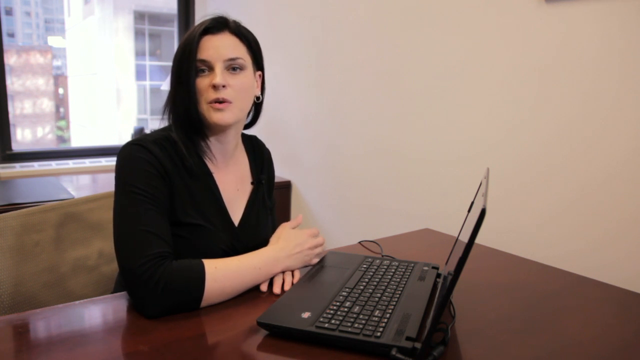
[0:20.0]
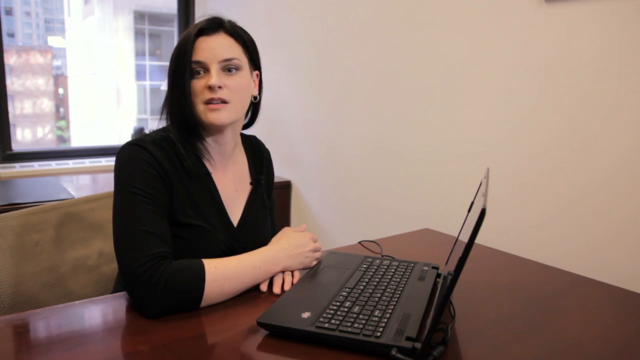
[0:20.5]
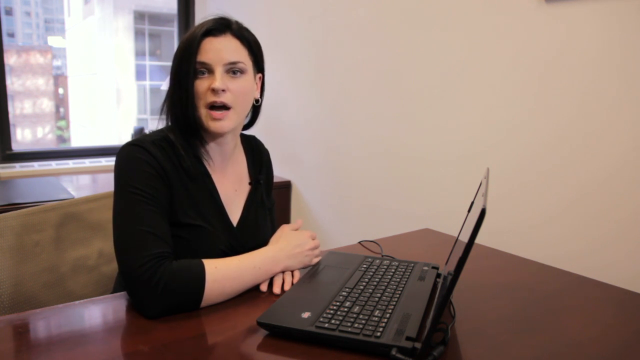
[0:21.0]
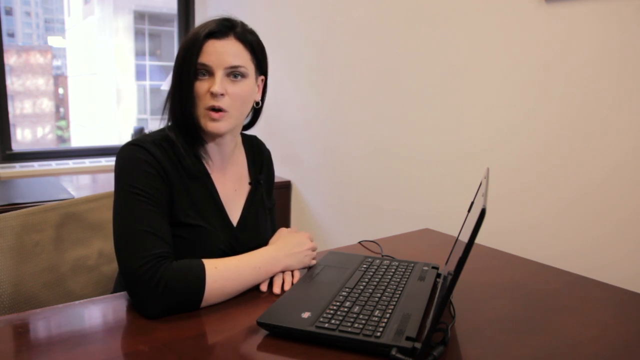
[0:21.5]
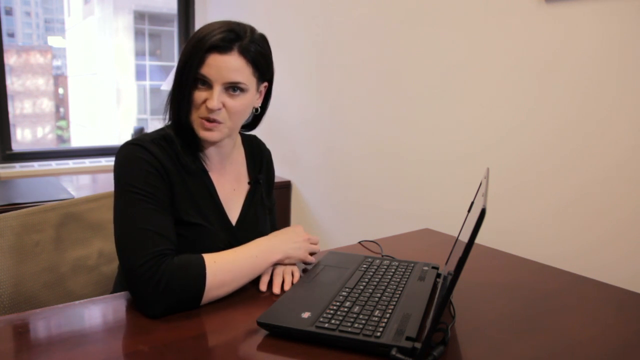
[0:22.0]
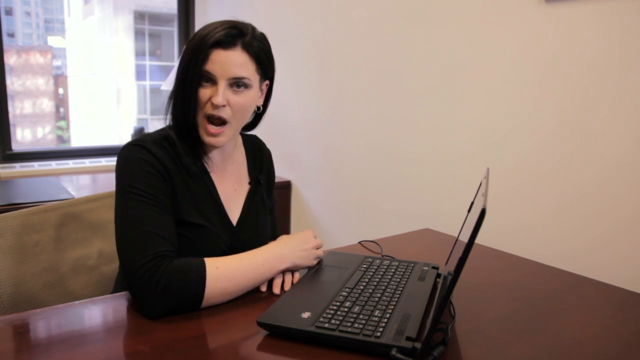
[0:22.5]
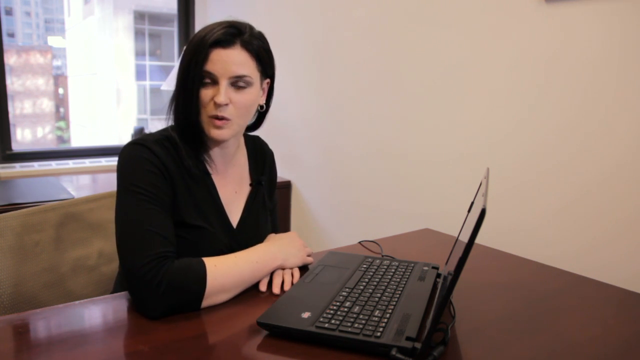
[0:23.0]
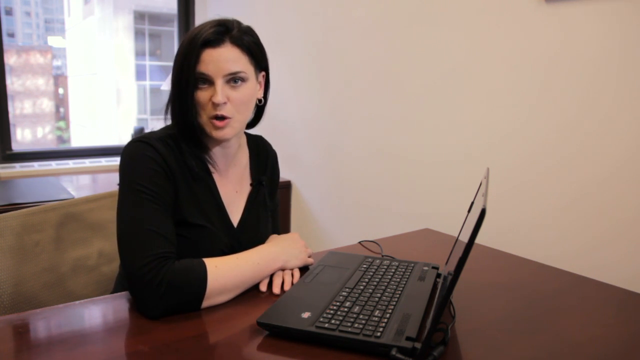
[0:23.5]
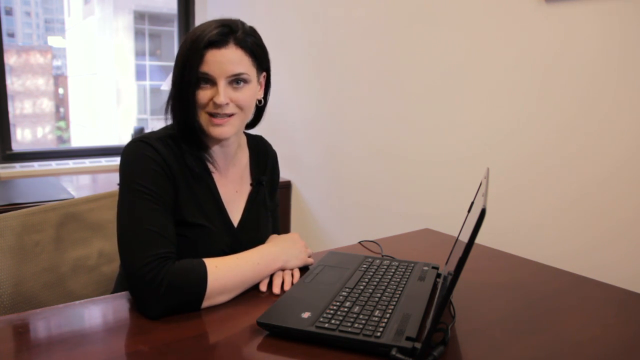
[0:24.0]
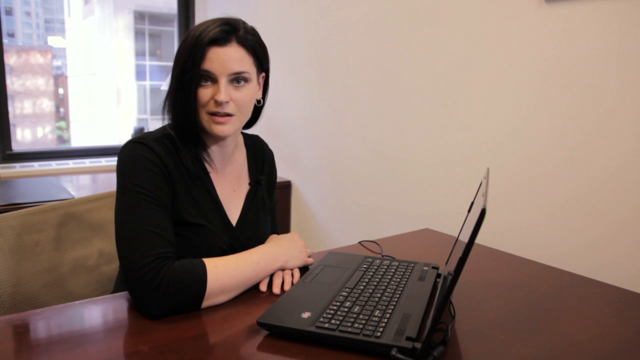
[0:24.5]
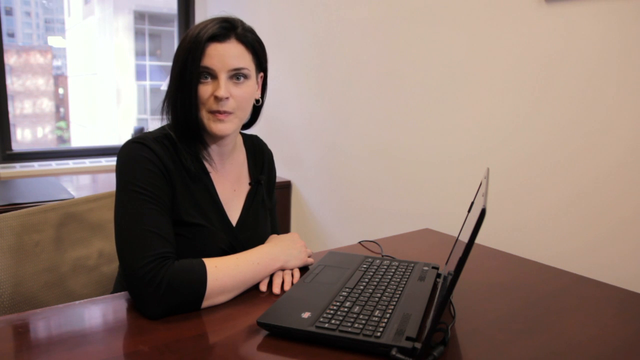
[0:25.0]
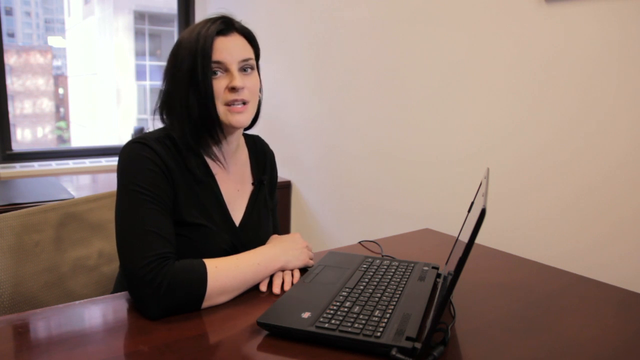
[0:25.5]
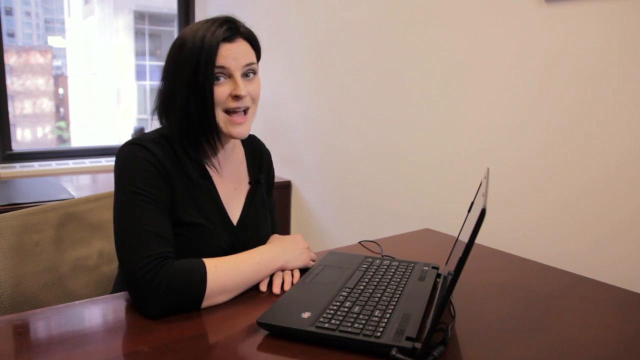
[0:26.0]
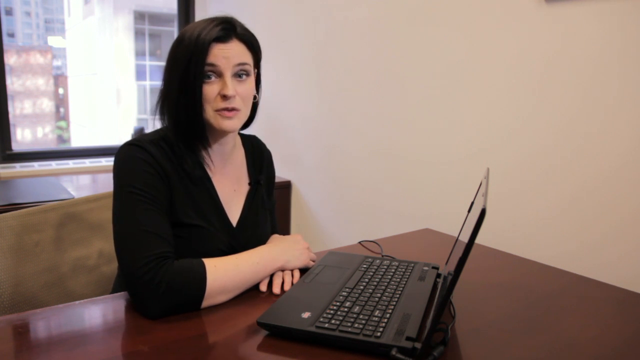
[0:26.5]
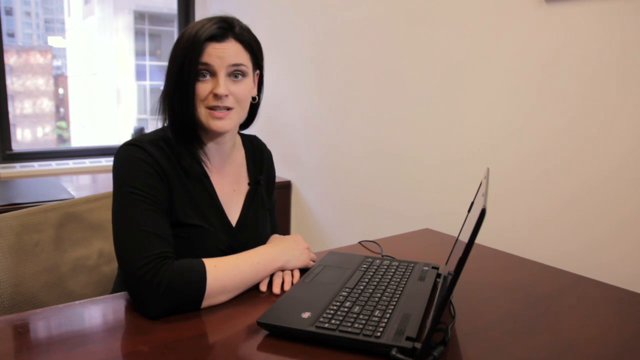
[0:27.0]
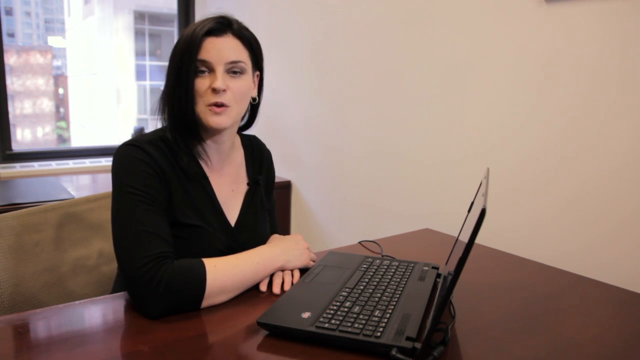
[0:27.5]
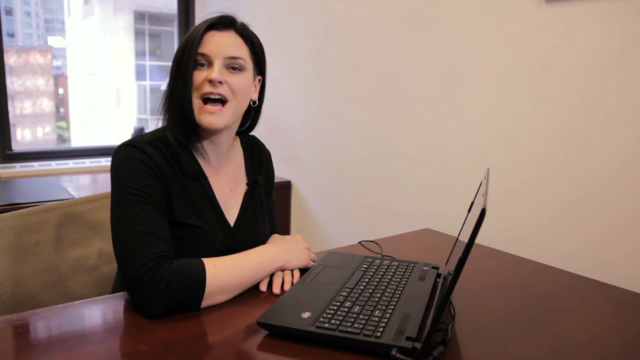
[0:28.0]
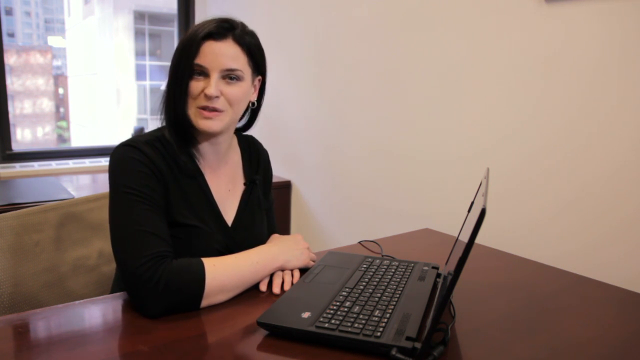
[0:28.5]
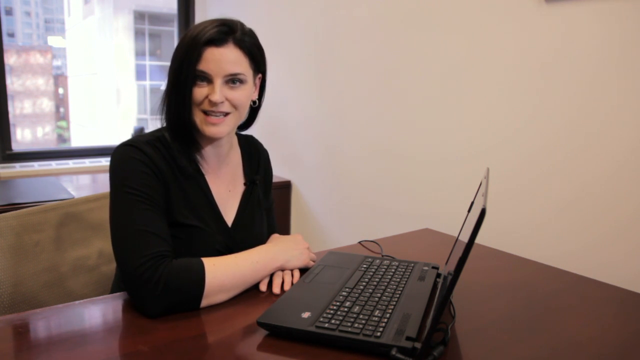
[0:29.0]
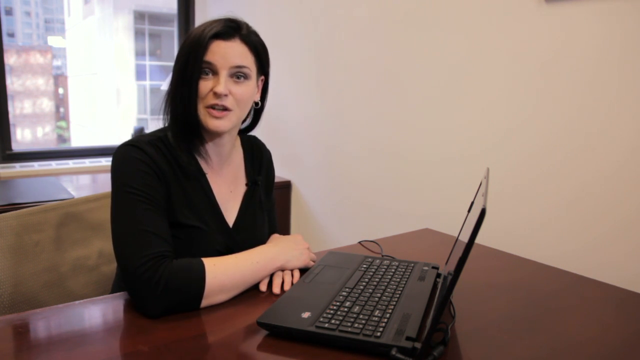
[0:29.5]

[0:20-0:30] A woman in a V-neck blouse with sleeves that reach just below the elbow rests her right elbow on a brown wooden desk, with both hands on the desk and her right hand underneath her left palm. She sits in a brown fabric office chair with a black laptop in front of her. Her body faces toward the right of the screen while her face is turned straight toward the camera. She has shoulder-length black hair brushed onto her right side and wears silver hoop earrings. Behind her is some kind of urban environment, with skyscrapers across the road. She talks toward the camera, occasionally twitching her right hand as she emphasizes her points, and she nods and smiles as she talks. Every now and then the reflection of a car driving on the road below her office is visible.